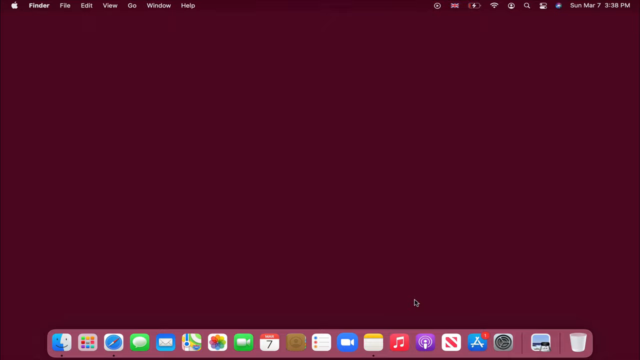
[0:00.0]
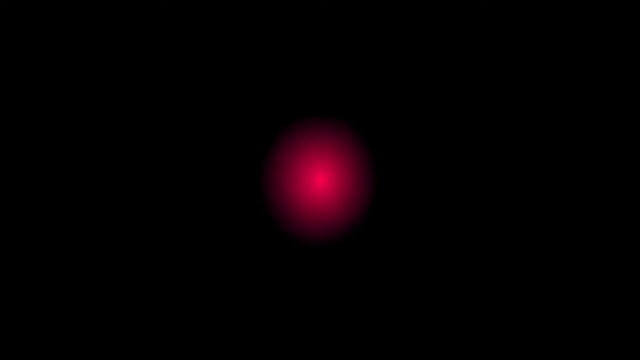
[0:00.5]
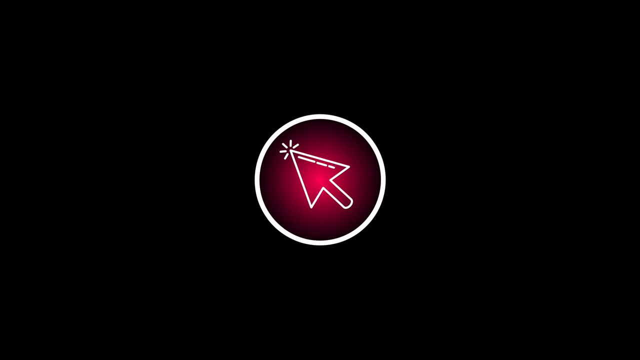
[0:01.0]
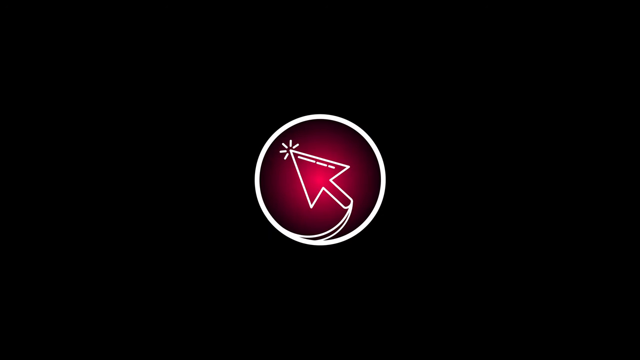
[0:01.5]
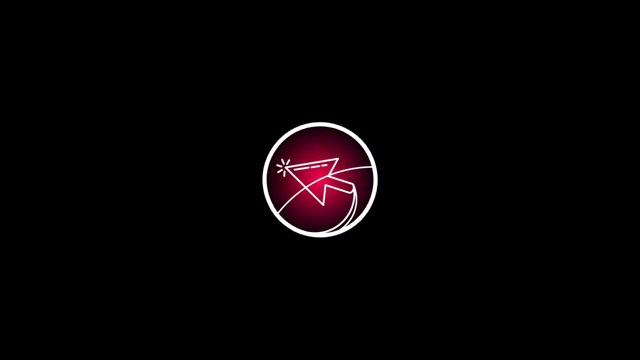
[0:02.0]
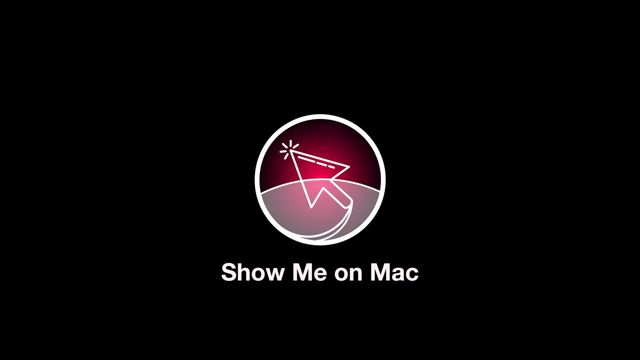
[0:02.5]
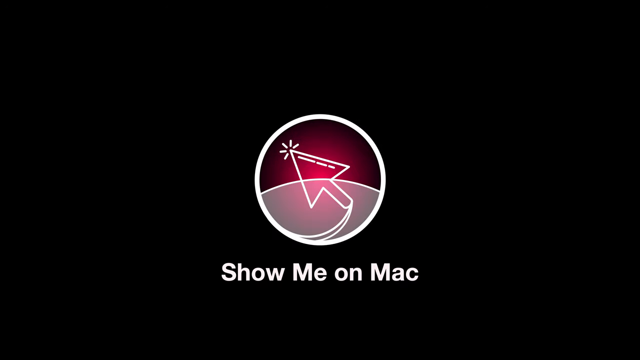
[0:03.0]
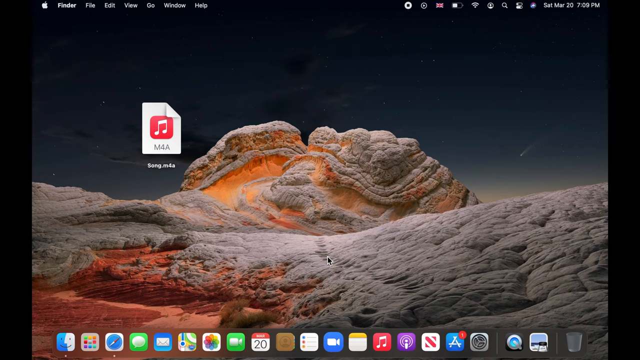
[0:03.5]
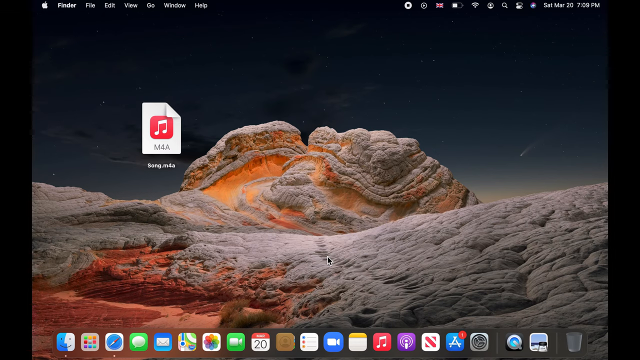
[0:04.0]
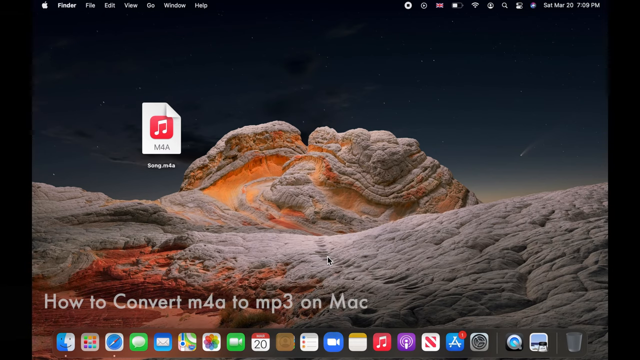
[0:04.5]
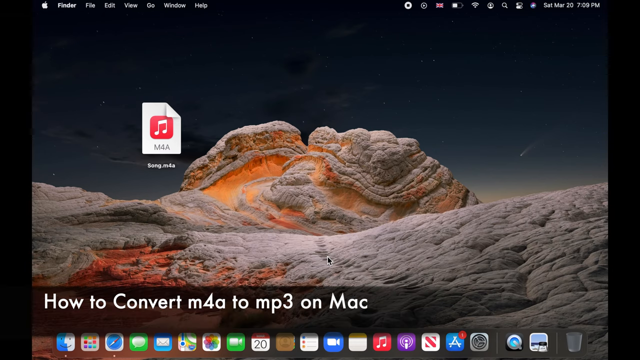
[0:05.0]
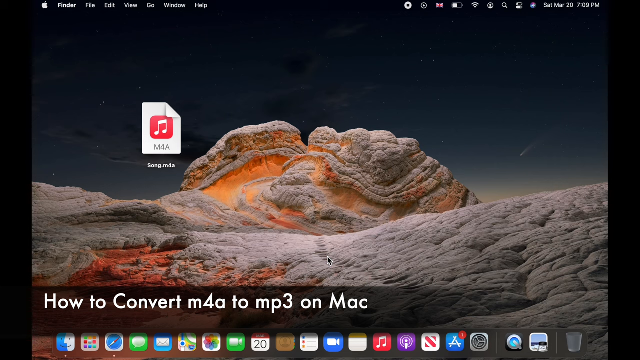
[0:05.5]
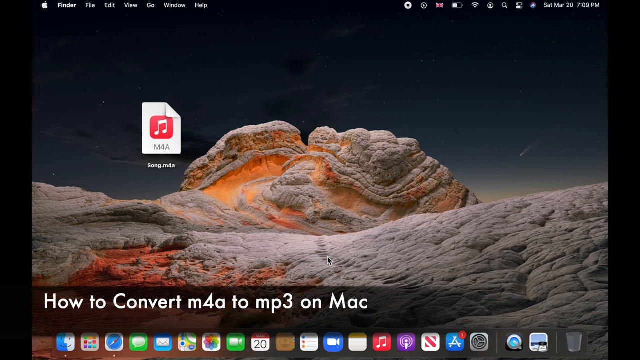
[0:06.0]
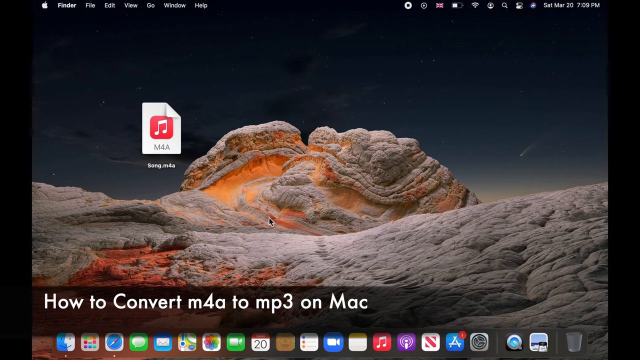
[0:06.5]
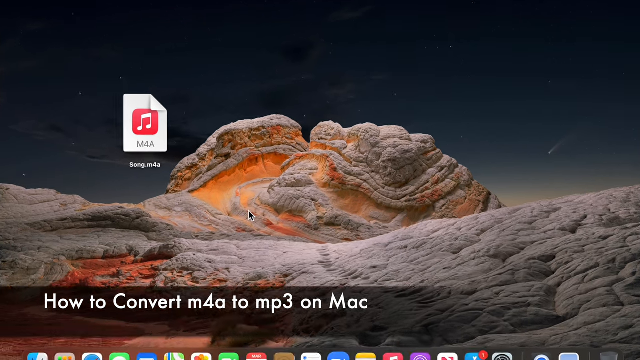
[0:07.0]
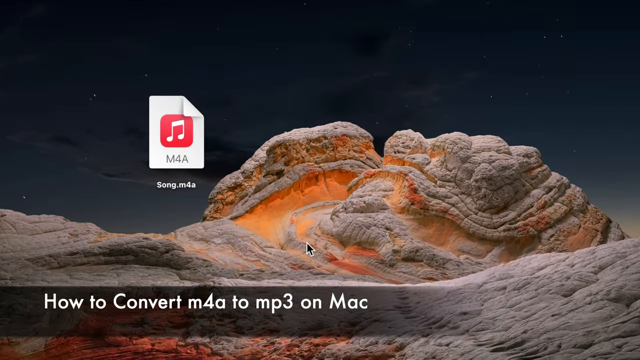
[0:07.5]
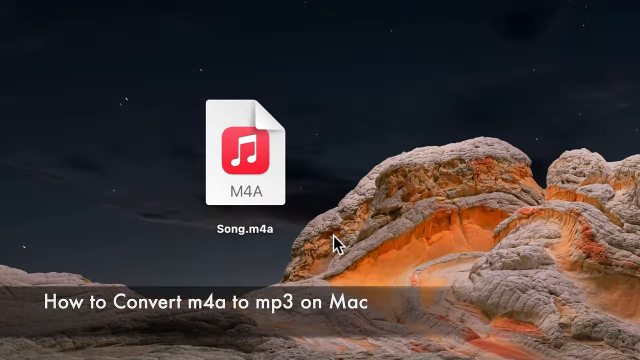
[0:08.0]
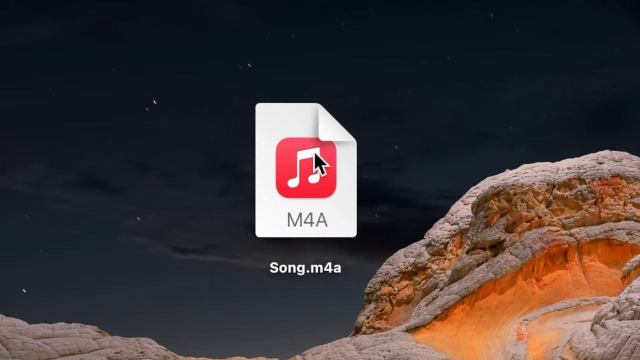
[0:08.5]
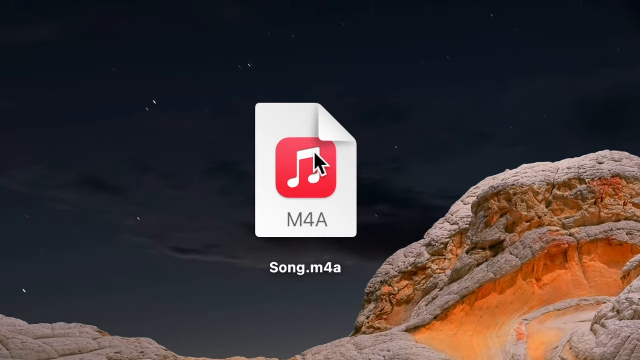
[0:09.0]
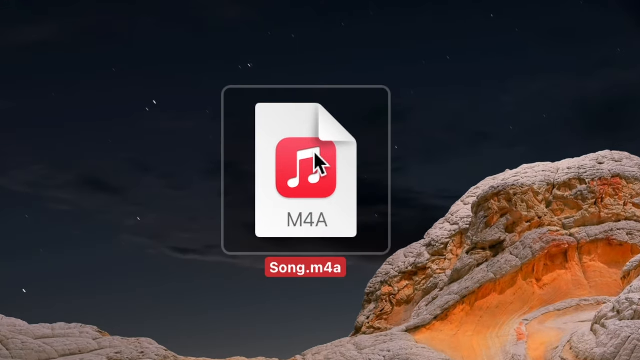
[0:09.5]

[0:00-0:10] The video opens on a red background with an introduction that says "Show me on Mac," apparently from a technology channel that makes tutorials on how to do things on a Mac. The logo seems to be a white circle with a cursor in the middle and some graphics interposed in the middle. The desktop of a Mac appears, with only an M4A-type music file on it and the applications below. The view moves closer to emphasize the audio file, which is double-clicked.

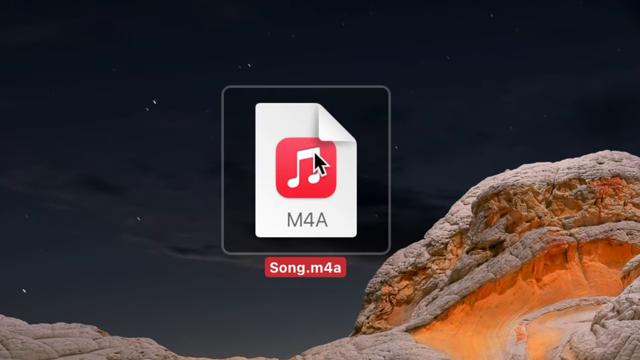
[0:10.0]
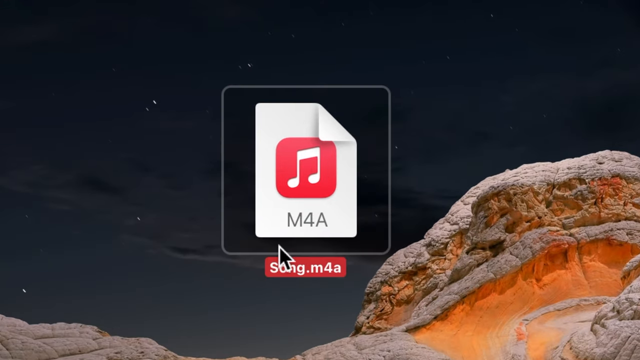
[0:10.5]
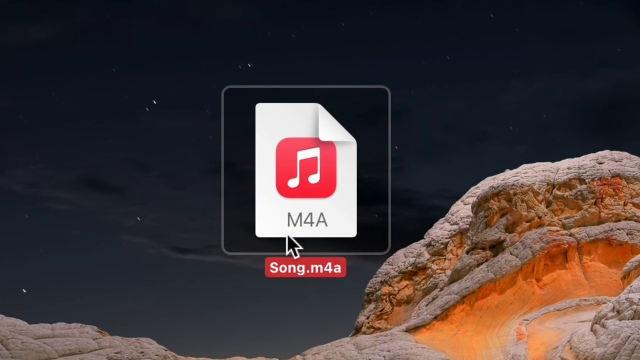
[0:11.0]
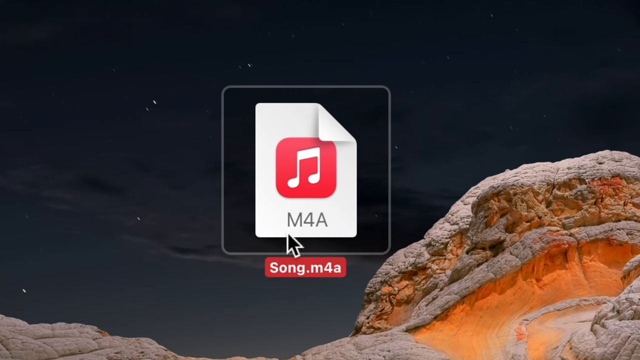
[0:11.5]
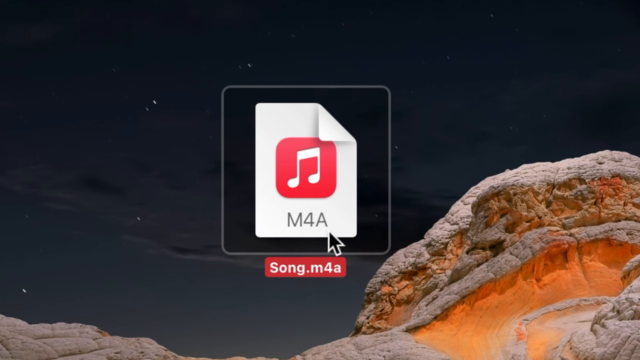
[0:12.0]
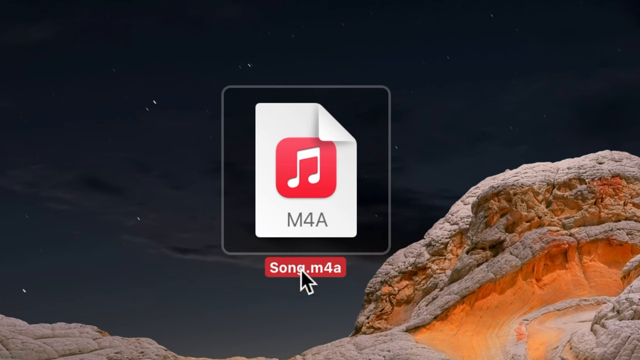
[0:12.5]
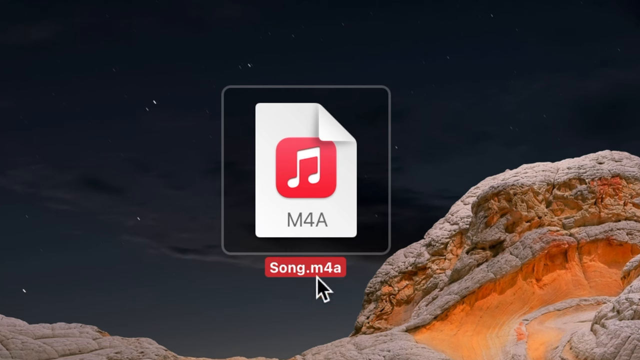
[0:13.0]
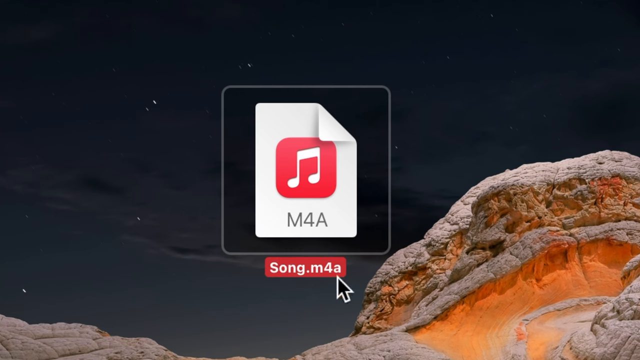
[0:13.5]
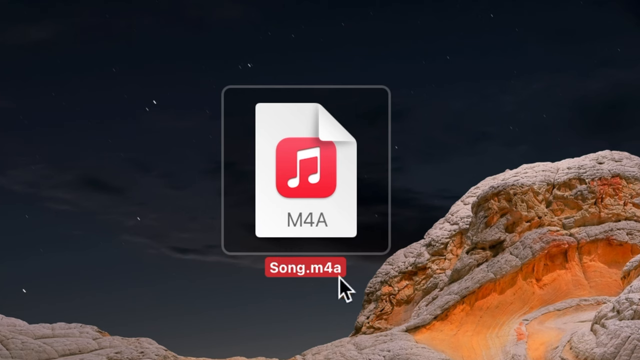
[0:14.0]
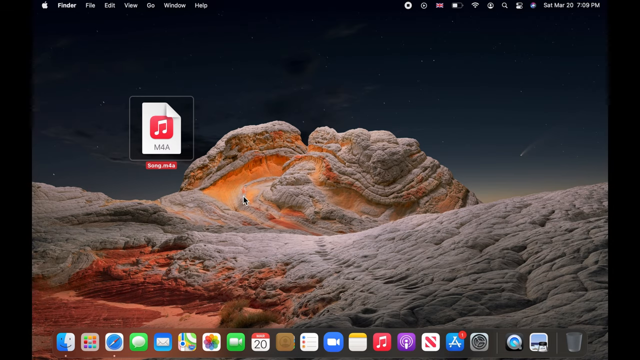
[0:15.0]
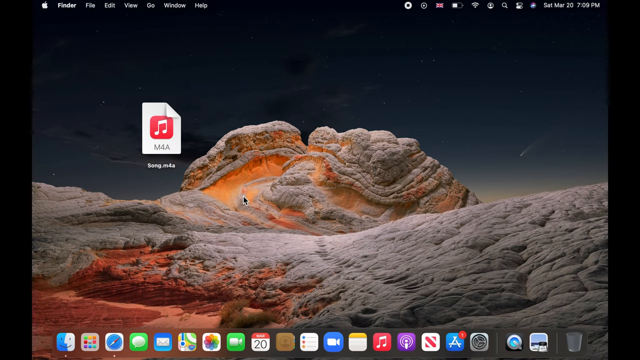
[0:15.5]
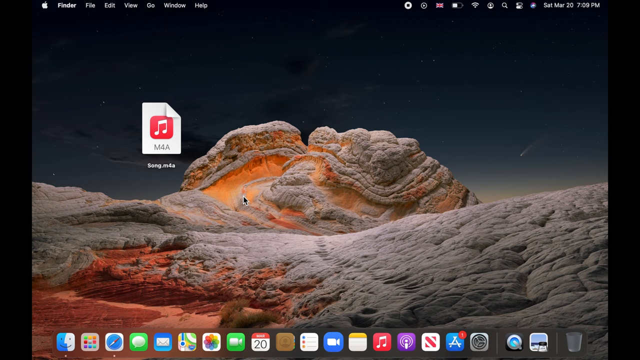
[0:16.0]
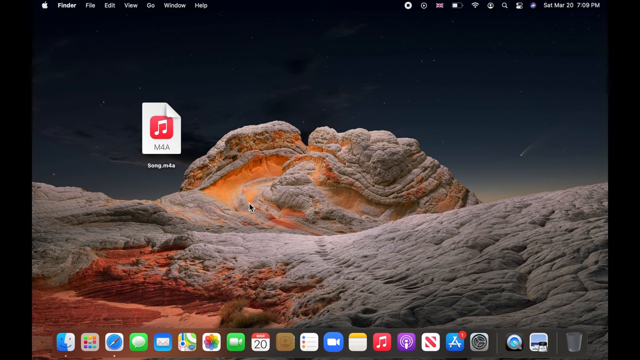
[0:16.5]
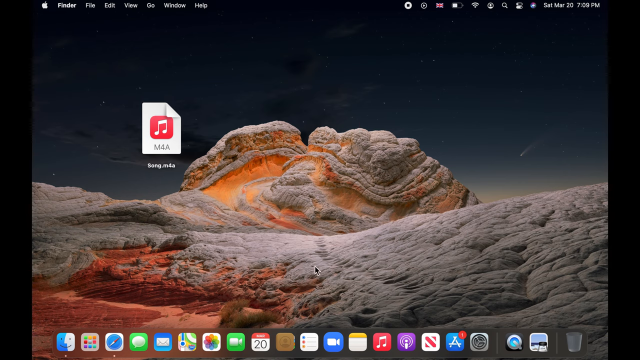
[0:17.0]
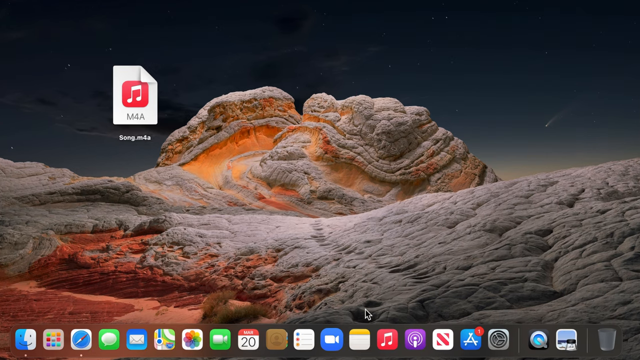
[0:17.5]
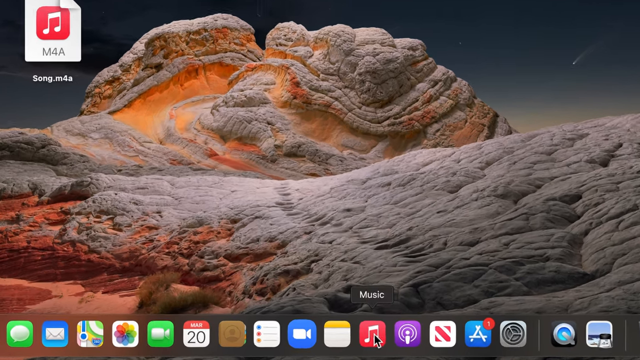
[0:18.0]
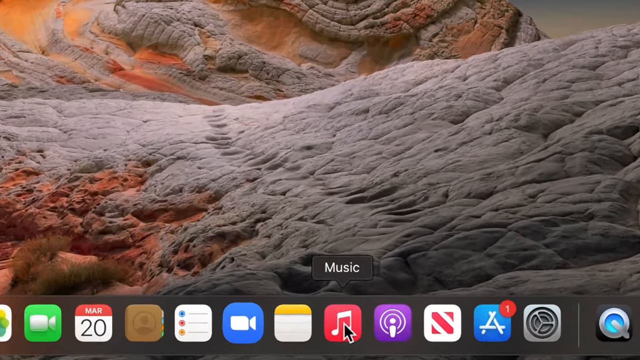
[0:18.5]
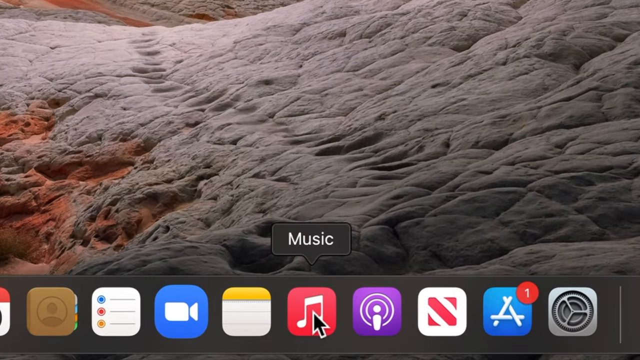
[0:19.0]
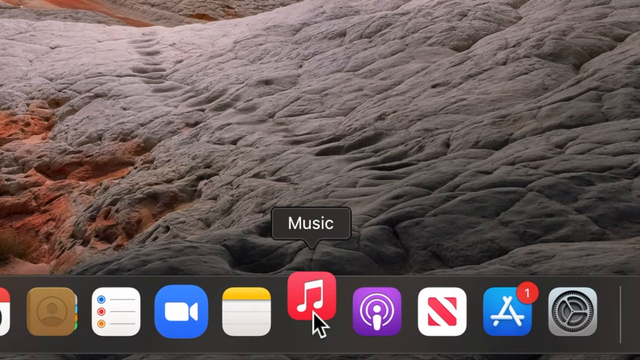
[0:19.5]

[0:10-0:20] With the file, called Song.m4a, selected, the user goes to the dock below and clicks to open the Music application. The video's editing zooms in and zooms out, and it seems to be a tutorial made for YouTube.